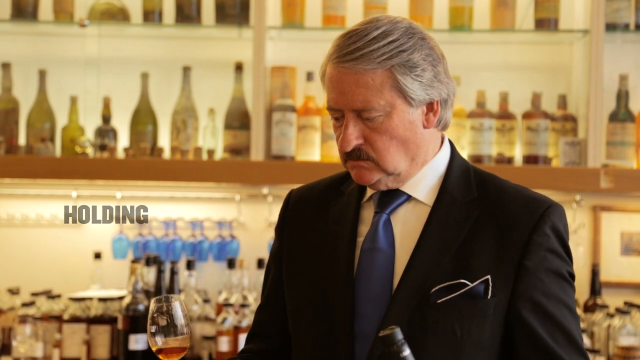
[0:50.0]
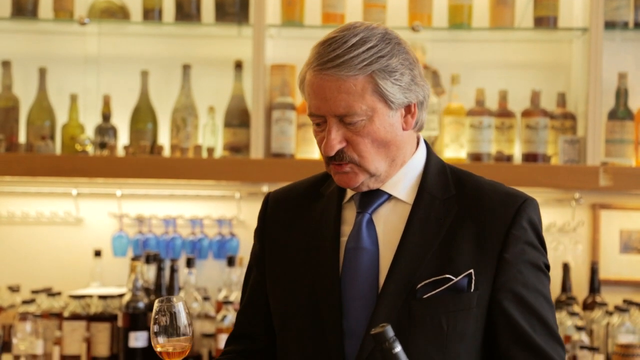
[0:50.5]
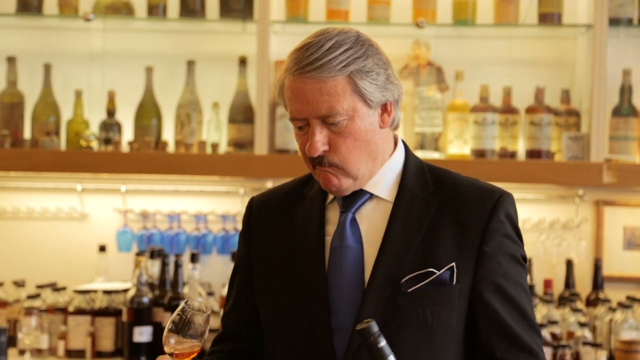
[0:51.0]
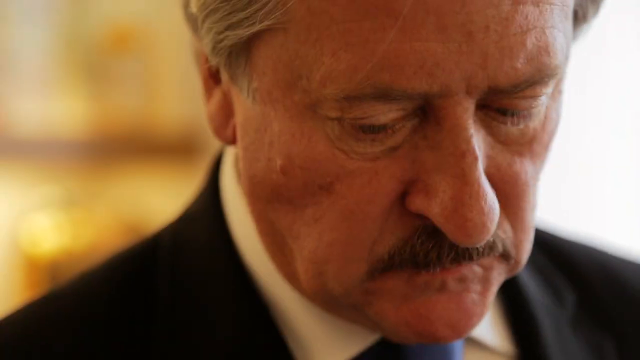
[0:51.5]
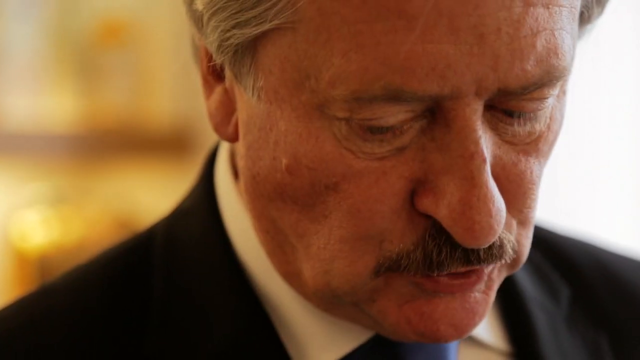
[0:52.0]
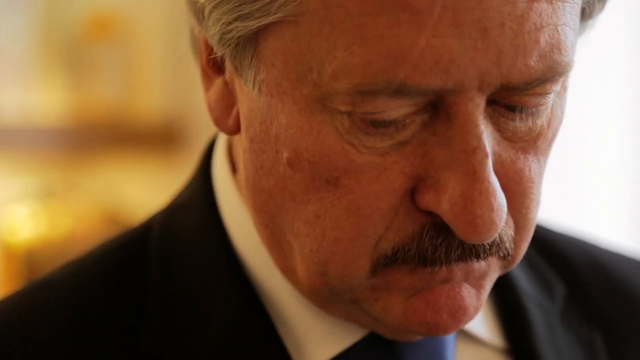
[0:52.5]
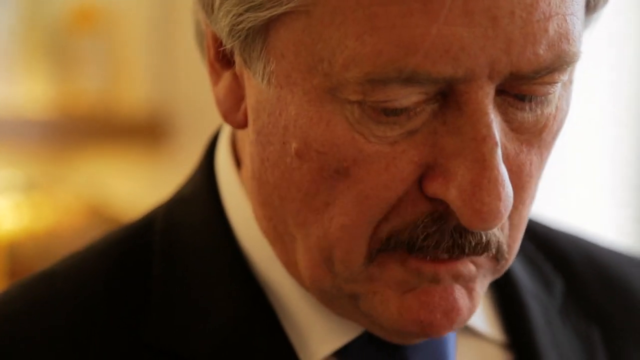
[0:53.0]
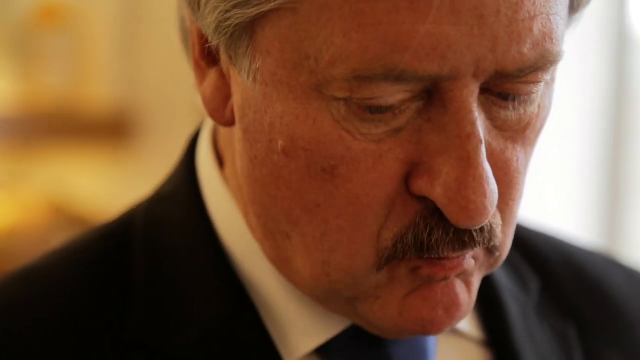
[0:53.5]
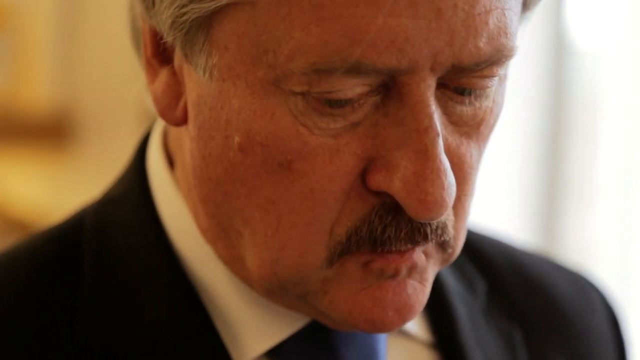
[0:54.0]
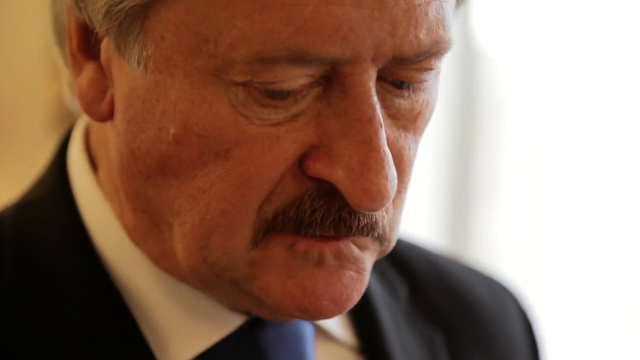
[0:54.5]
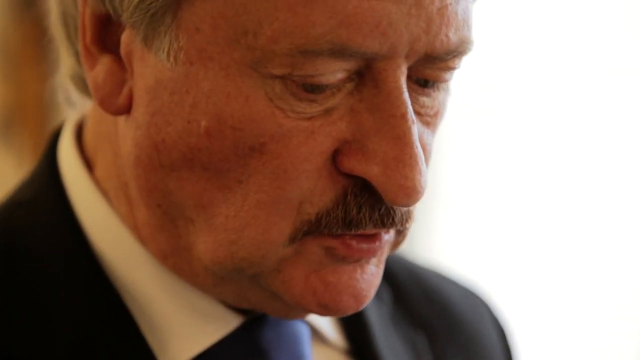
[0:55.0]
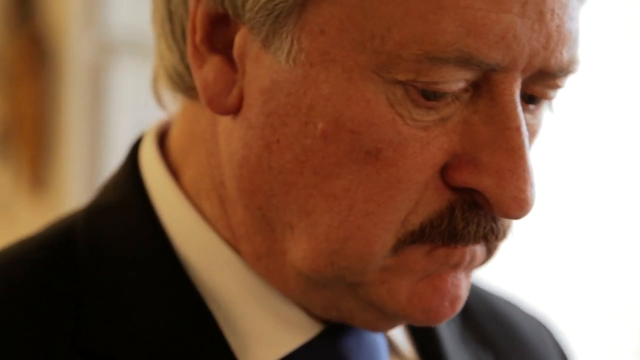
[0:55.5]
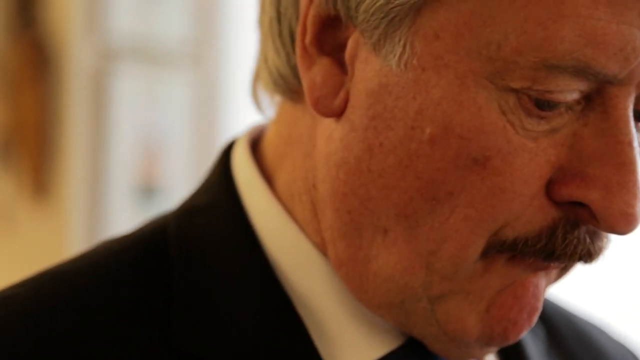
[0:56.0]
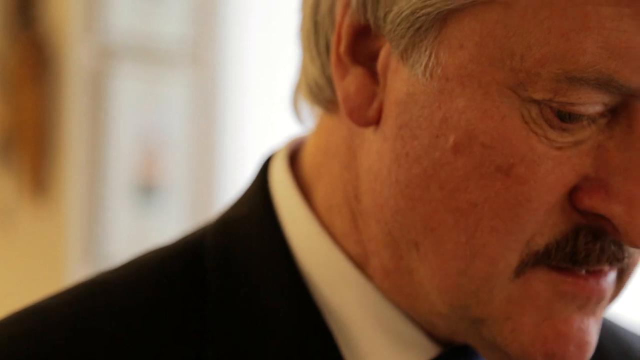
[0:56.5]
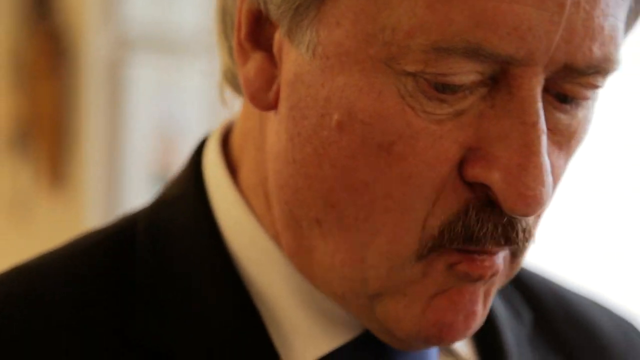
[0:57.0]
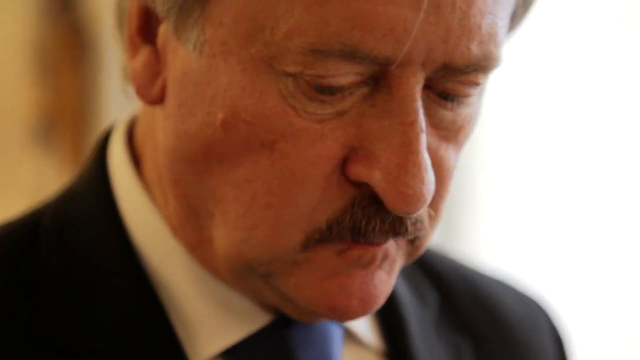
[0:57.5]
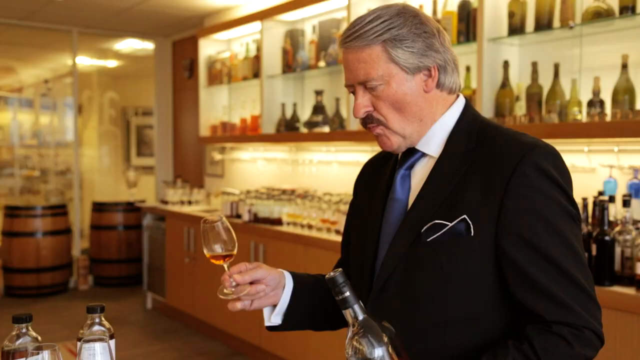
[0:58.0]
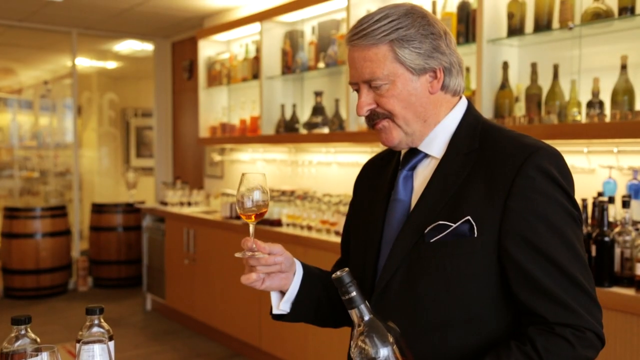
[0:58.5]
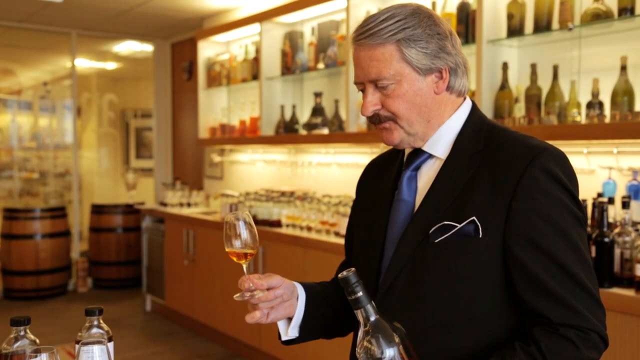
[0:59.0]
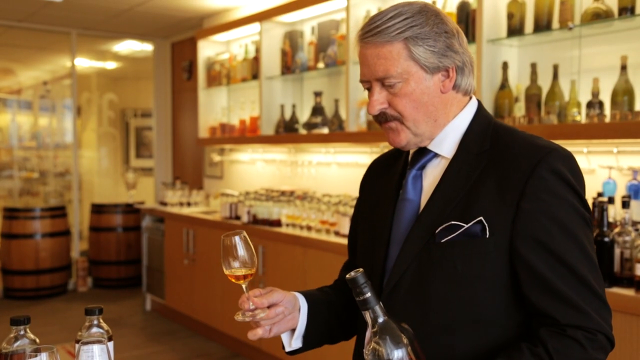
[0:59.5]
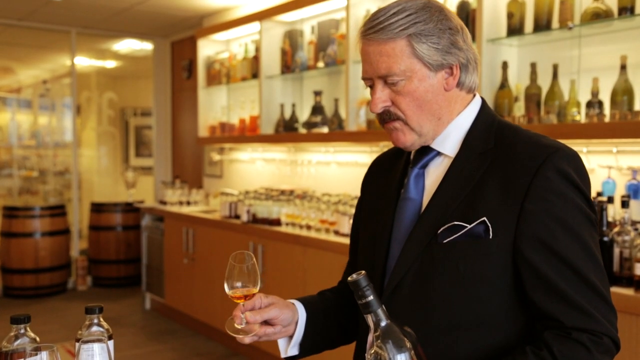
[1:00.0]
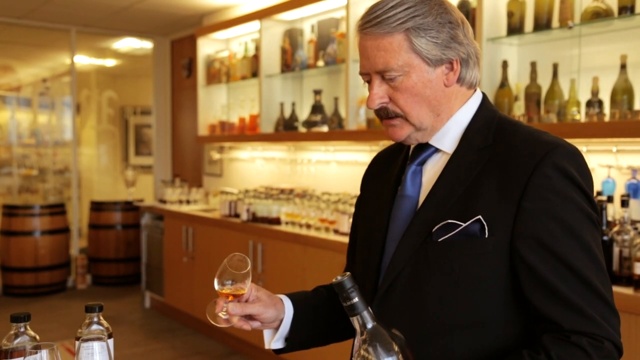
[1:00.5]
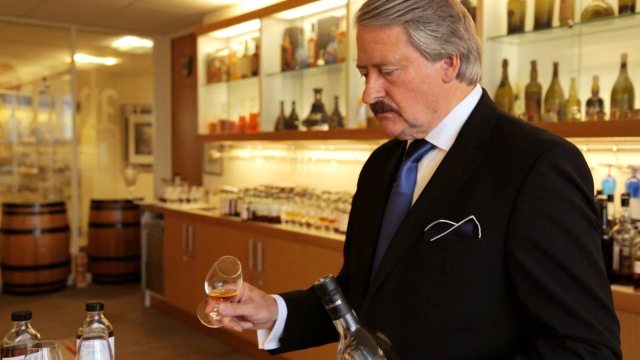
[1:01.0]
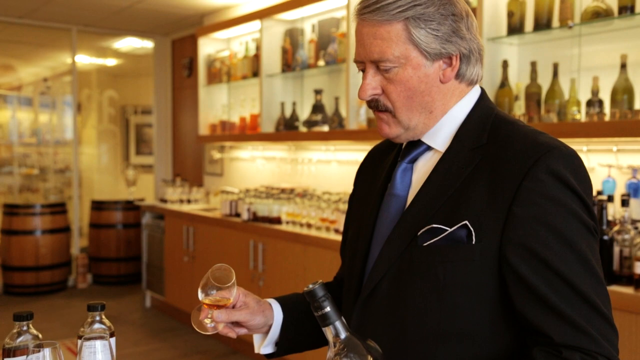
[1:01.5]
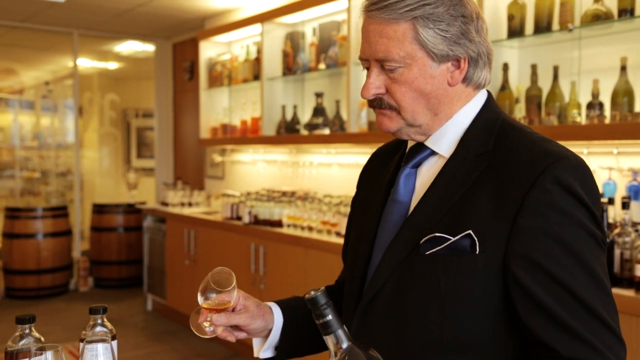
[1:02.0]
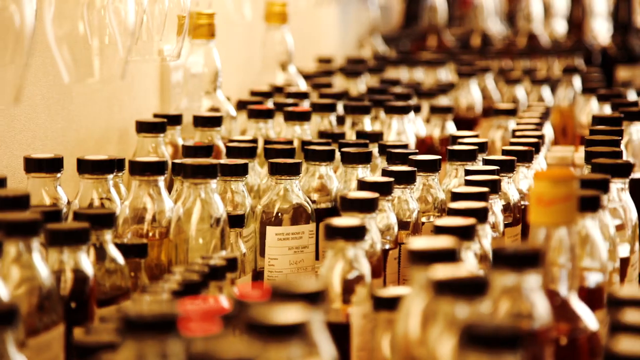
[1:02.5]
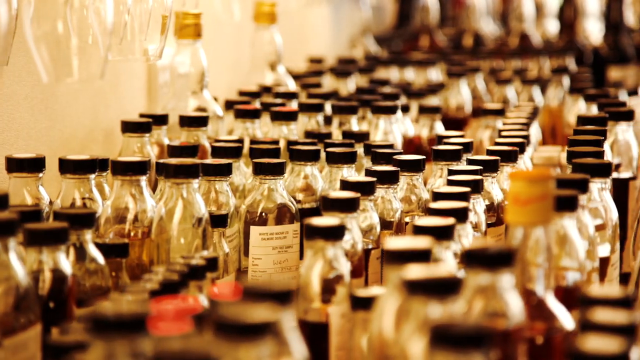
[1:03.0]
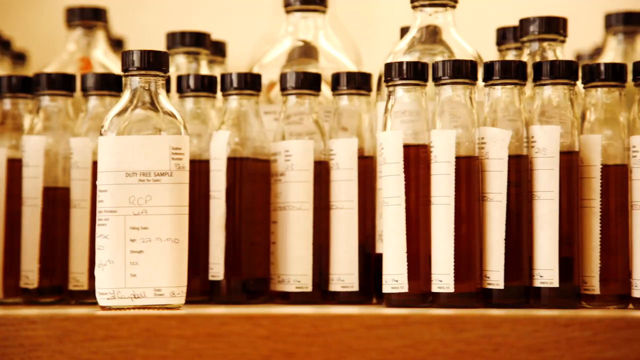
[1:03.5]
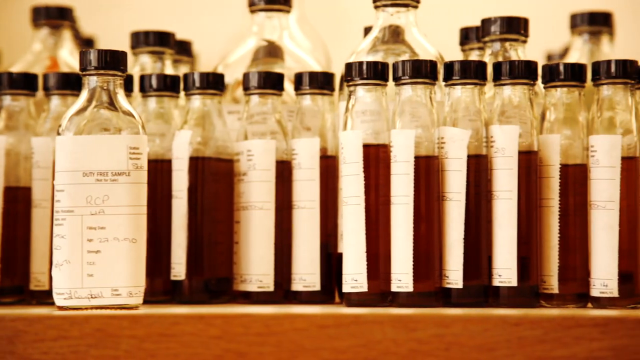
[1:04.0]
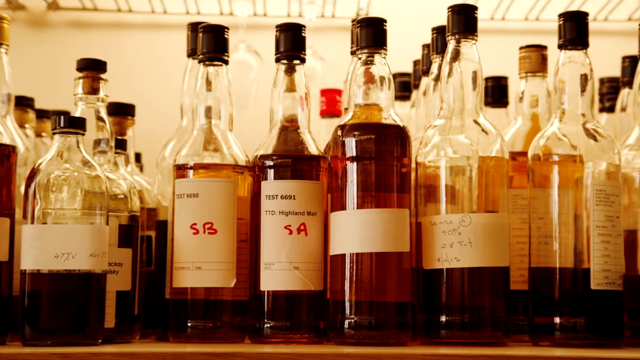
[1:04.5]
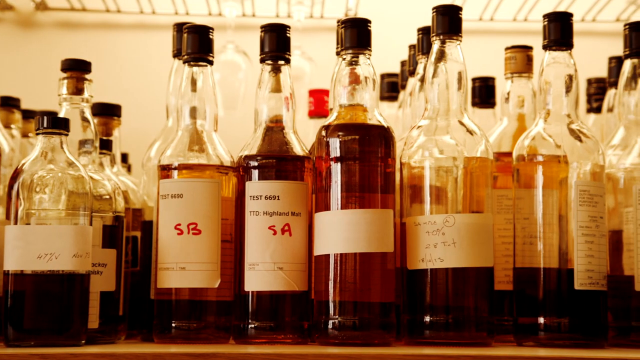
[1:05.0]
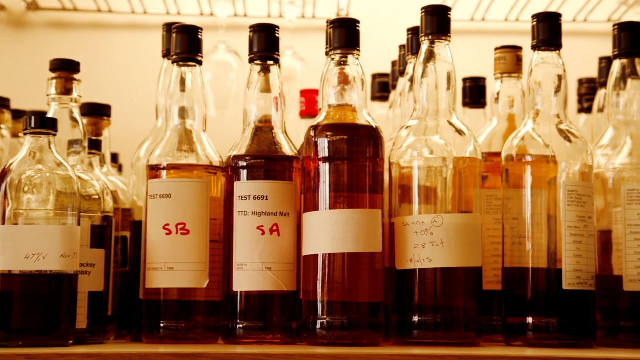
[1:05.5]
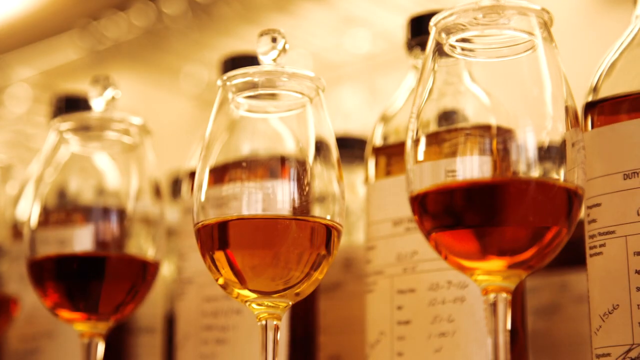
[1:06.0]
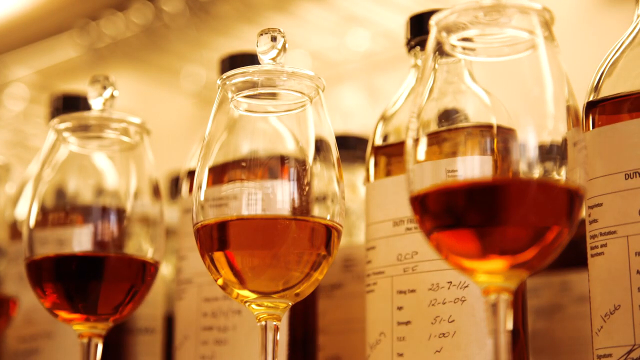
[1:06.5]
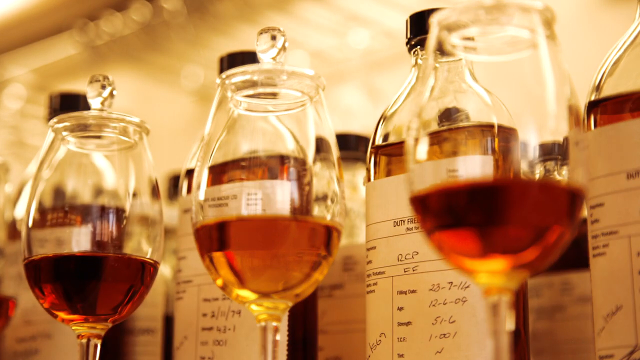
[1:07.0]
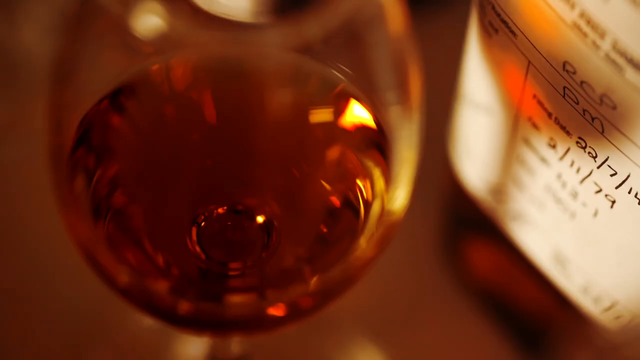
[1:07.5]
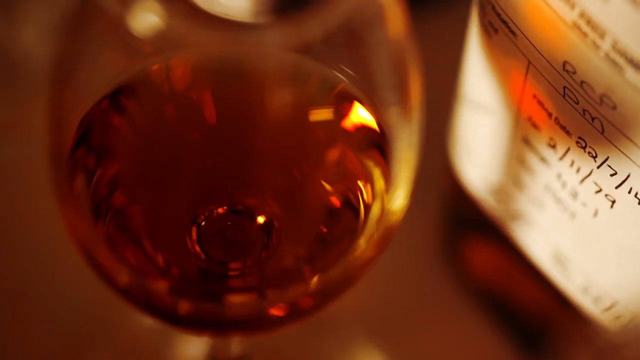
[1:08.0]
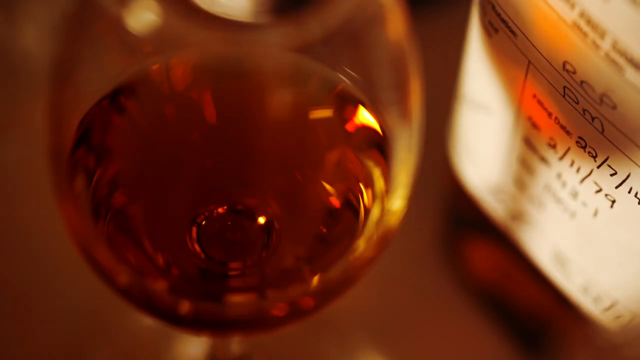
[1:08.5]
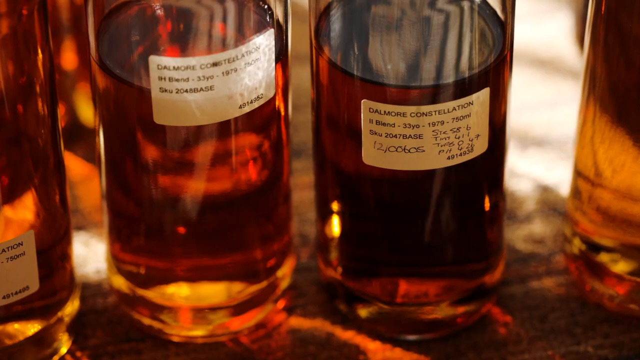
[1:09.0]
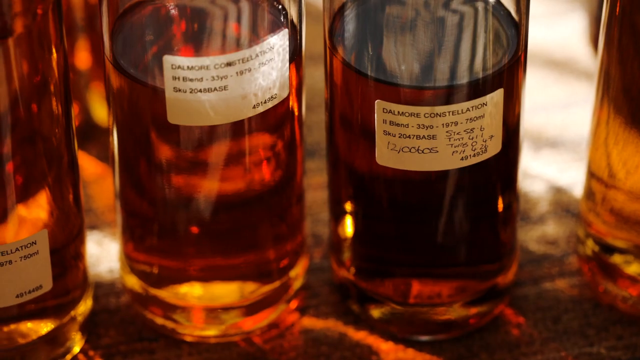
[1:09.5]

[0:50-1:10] The master distiller swallows his taste. He has other whiskeys to taste, which he marks and numbers, and he keeps moving between them. It looks almost like he is chewing the whiskey in his mouth. He is a distinguished-looking gentleman with a full head of gray hair and a dark mustache, wearing a dark suit, a slightly lighter blue tie, a white shirt, and a kerchief in his pocket. He is in a professional tasting room, and the tasting seems to be kind of blind: he has different whiskeys on his counter, but their brands cannot be seen.